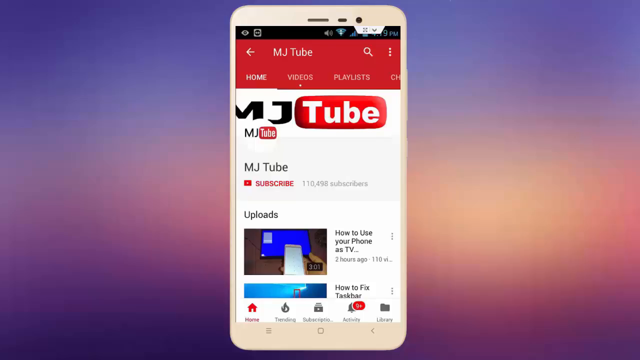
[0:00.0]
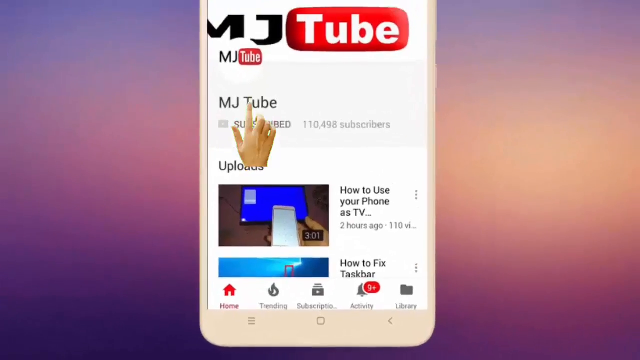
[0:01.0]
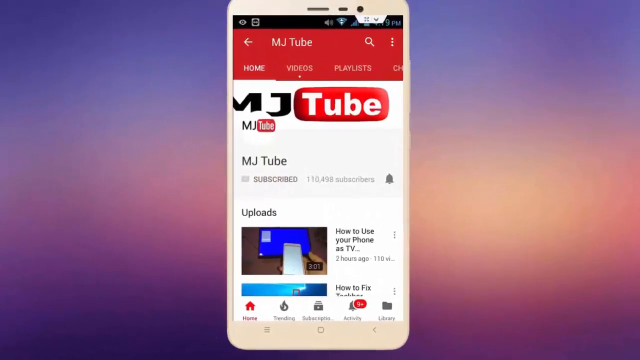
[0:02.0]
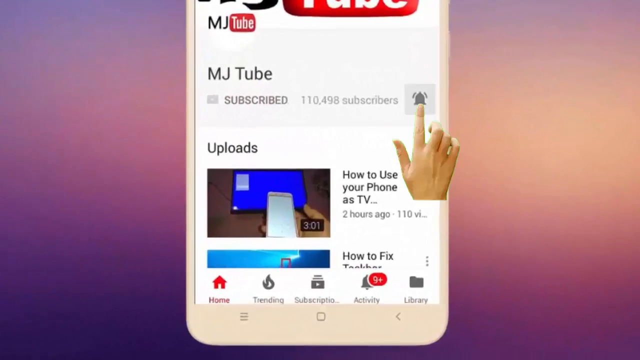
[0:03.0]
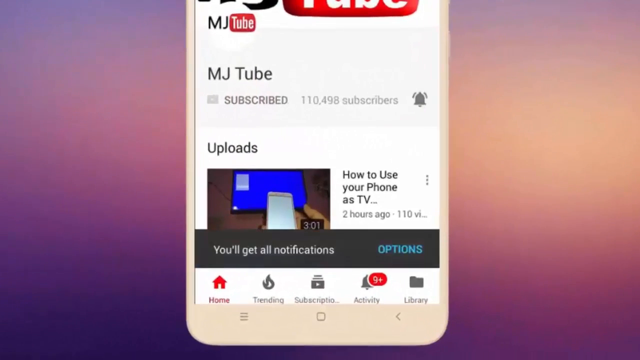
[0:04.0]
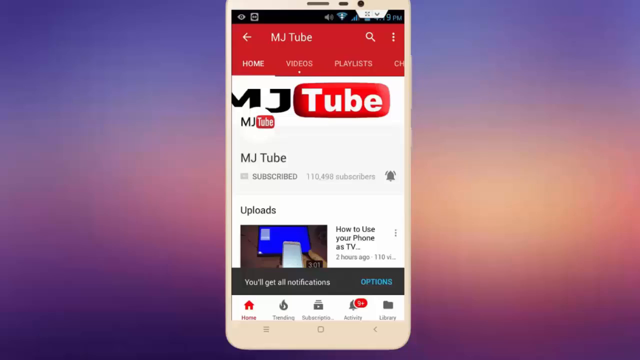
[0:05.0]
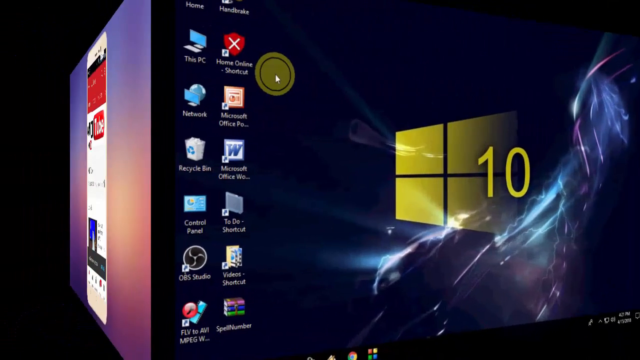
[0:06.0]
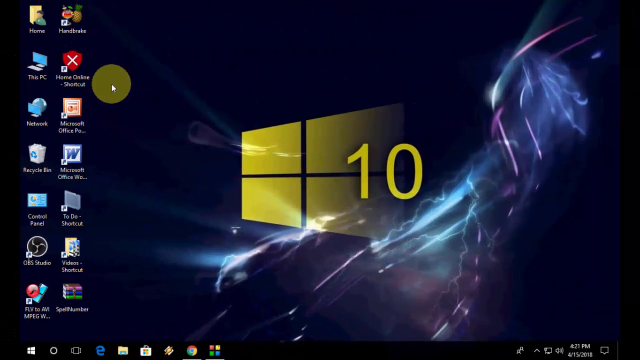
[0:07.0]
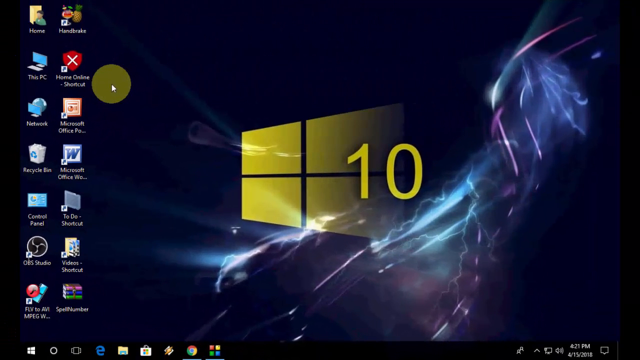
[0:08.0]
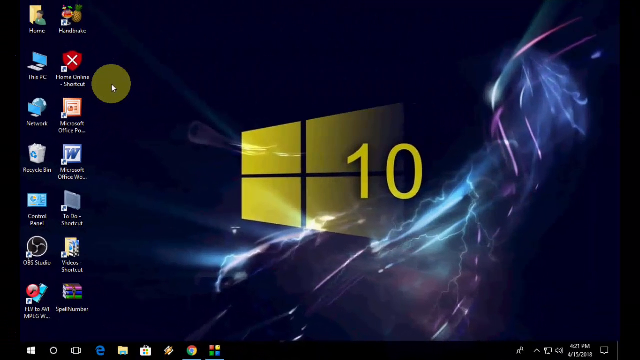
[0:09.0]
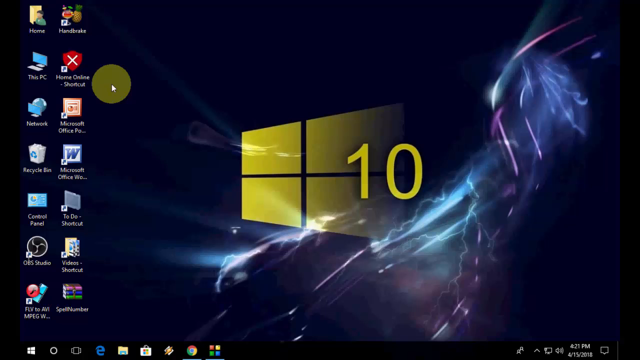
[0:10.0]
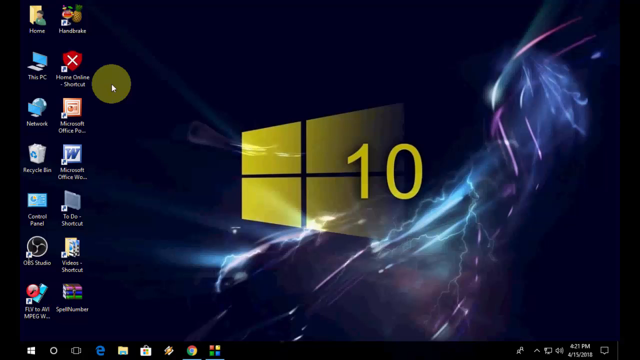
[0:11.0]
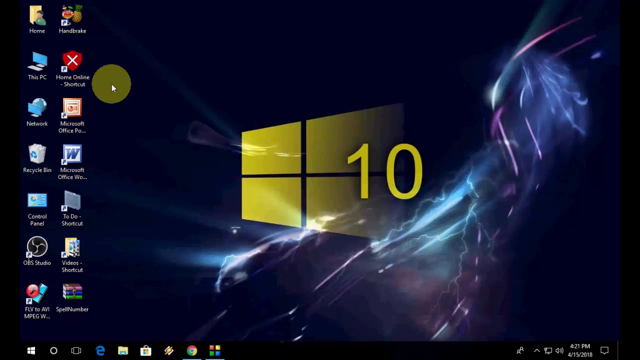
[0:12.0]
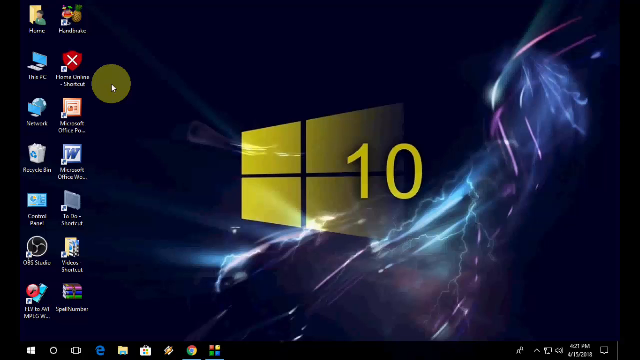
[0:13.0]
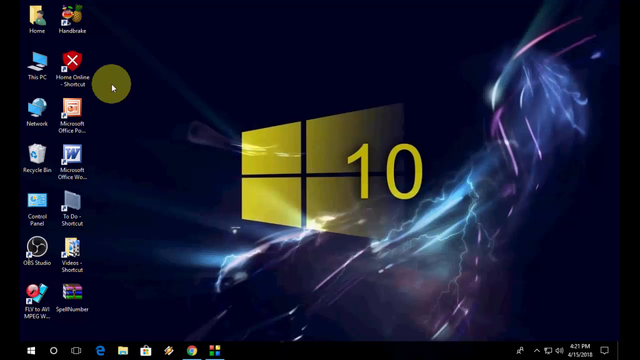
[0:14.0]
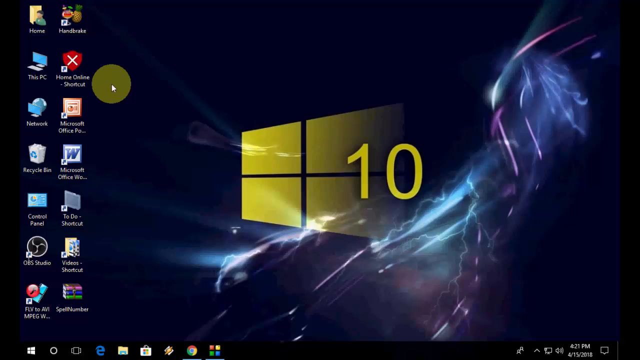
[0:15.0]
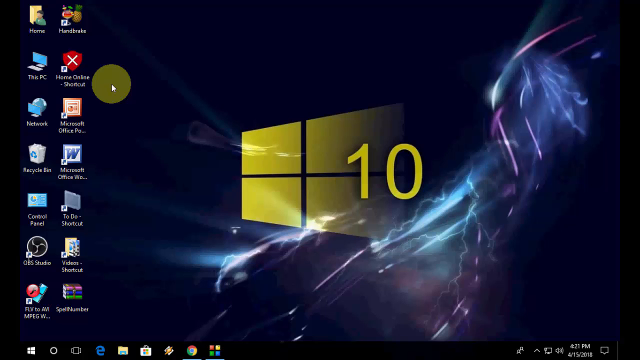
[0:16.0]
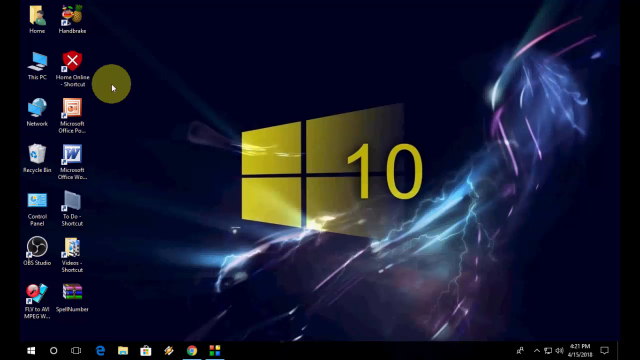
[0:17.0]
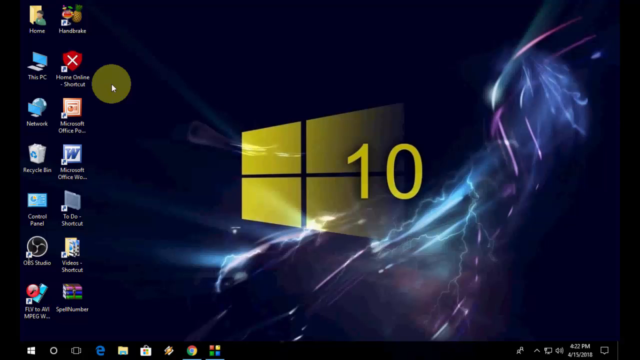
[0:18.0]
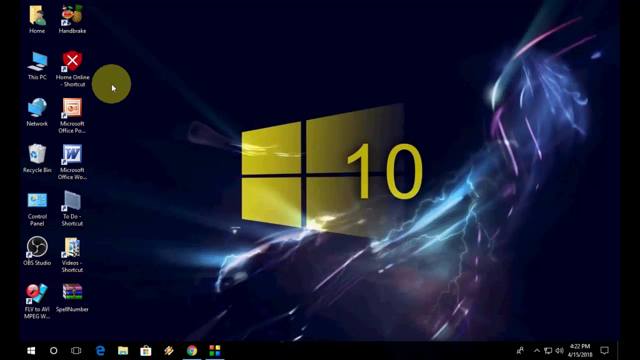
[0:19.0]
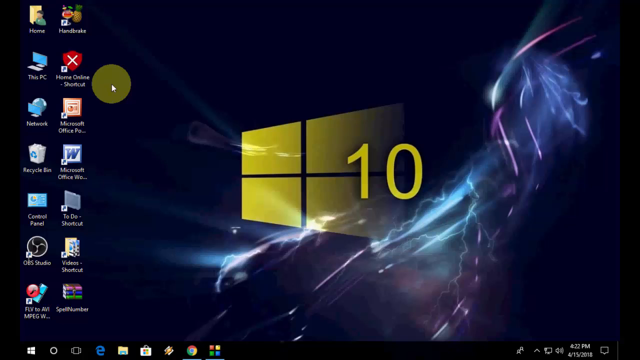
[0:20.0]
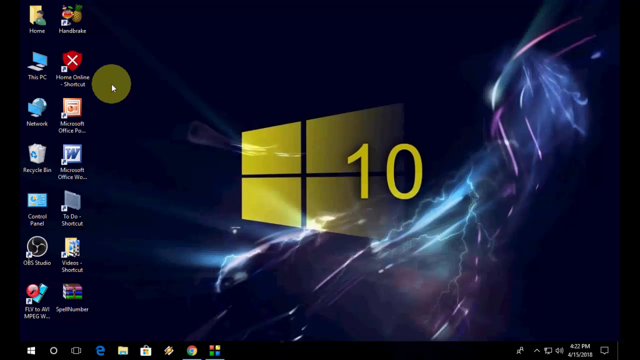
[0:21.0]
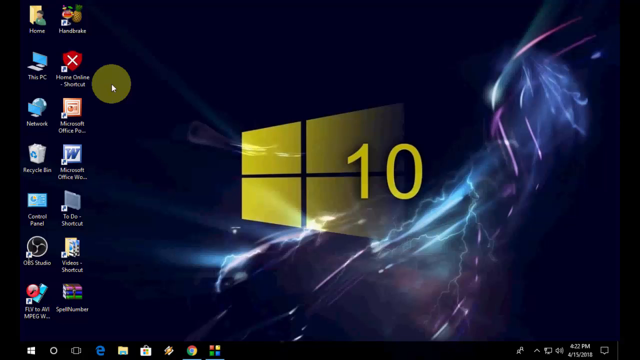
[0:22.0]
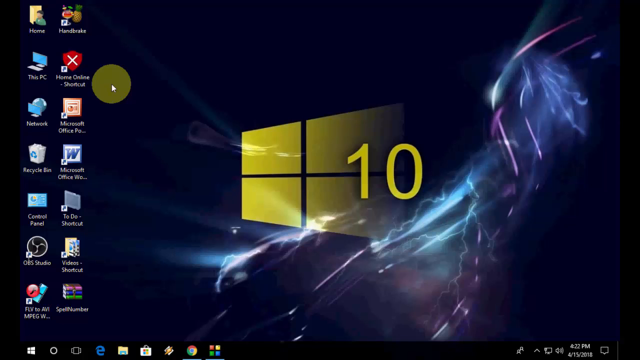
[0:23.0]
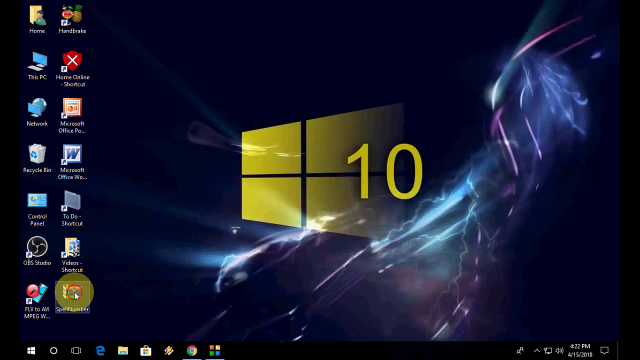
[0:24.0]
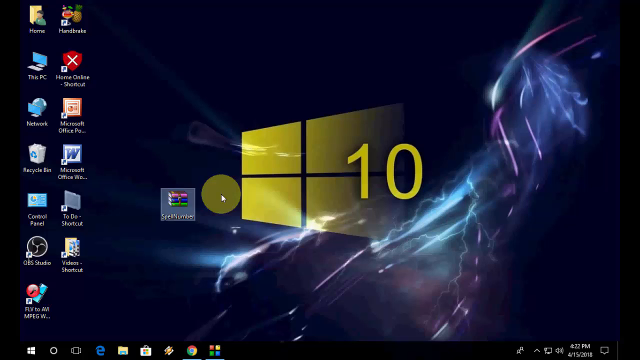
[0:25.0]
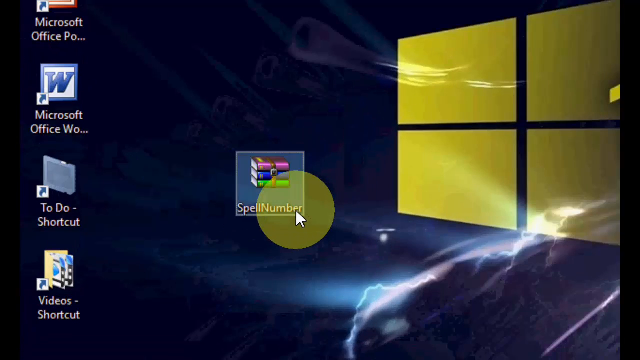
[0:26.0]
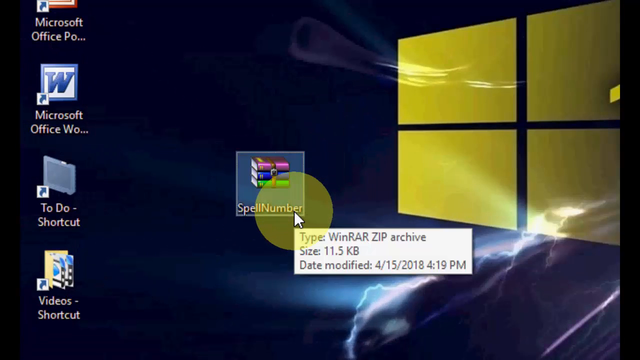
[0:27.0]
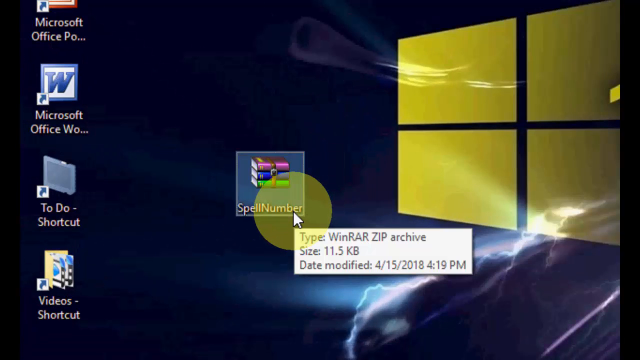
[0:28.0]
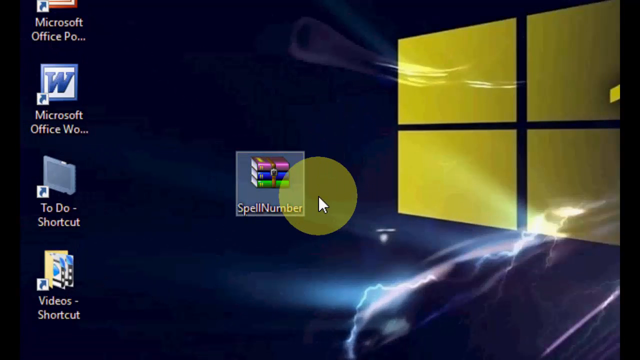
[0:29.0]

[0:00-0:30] The image of a mobile phone appears, and the view zooms in to show a YouTube channel, MJ tube, with a finger graphic, index finger out, pointing to it. The phone zooms in and out. The finger clicks on subscribe and then presses the bell button for notifications, and the phone zooms away. As though it is on a cube, the view rotates to the left and a different screen slides in: a Windows screen saver showing the four-pane window in yellow with the number 10 and some streaks of light. On the left side are two columns of icons. The cursor is on the left side in a yellow circle. The cursor moves down, grabs a spell numbers stack of books and moves it closer to the four-pane window, the Windows logo.